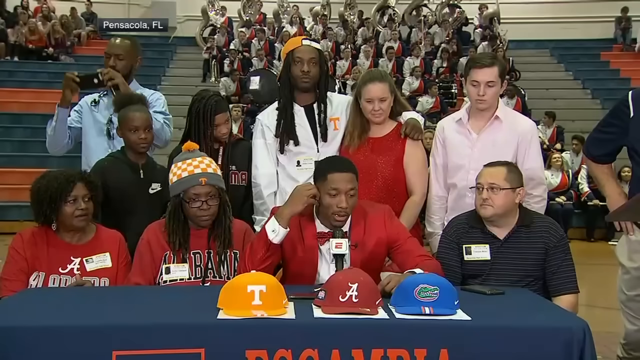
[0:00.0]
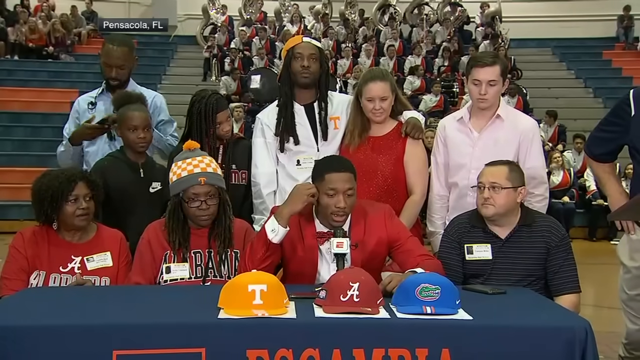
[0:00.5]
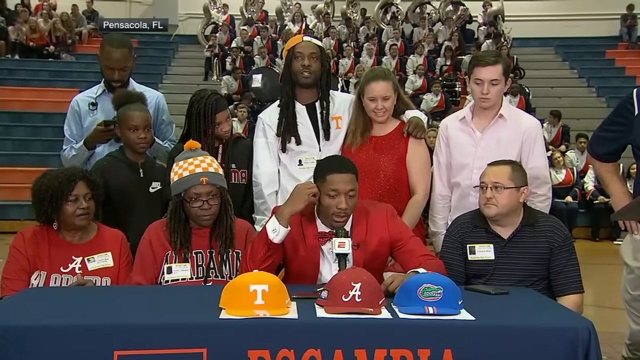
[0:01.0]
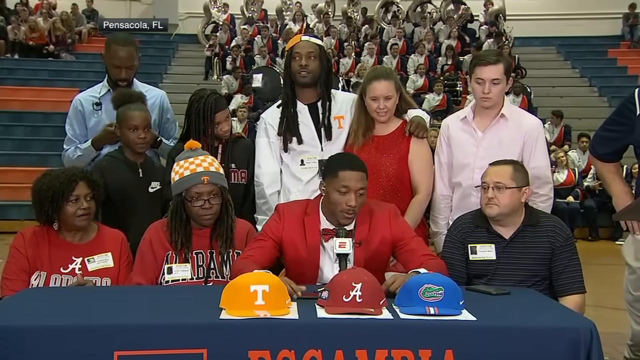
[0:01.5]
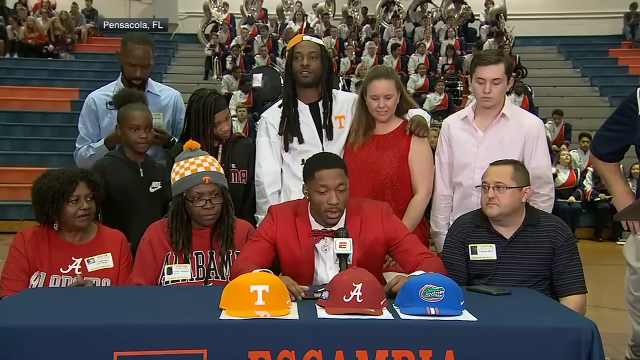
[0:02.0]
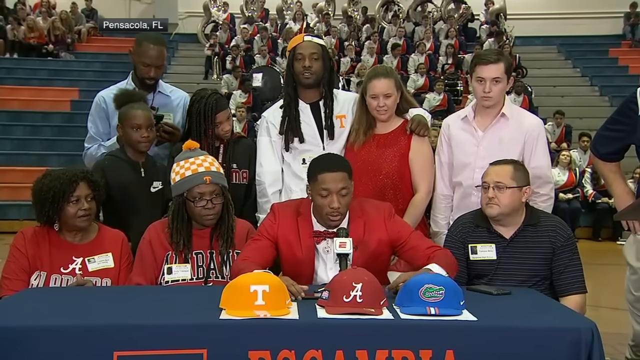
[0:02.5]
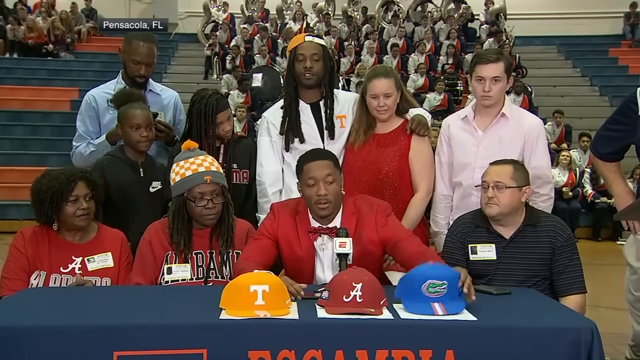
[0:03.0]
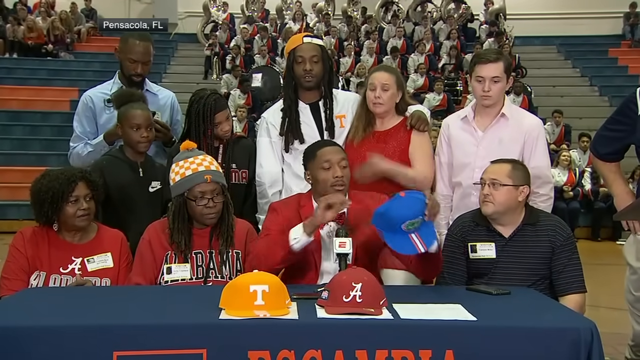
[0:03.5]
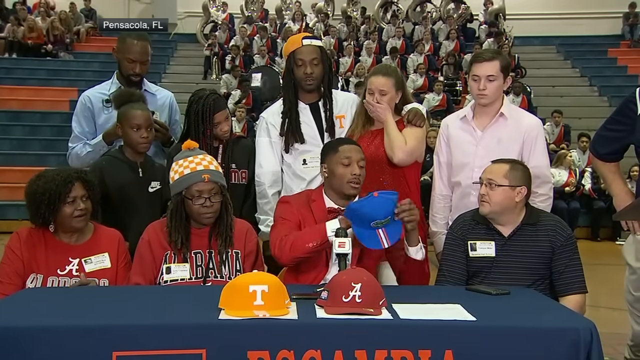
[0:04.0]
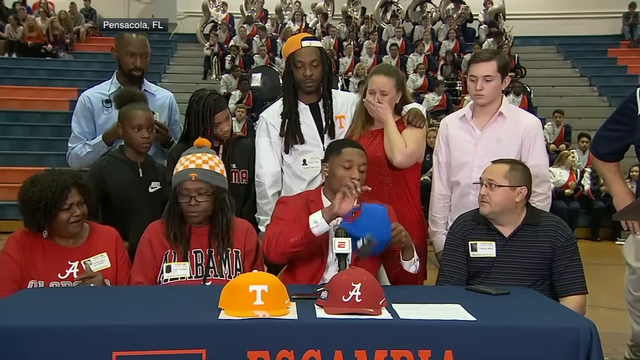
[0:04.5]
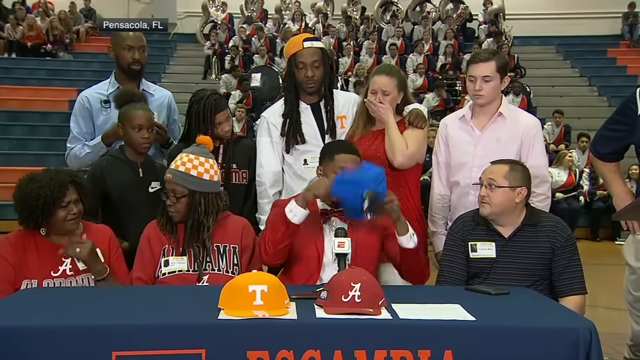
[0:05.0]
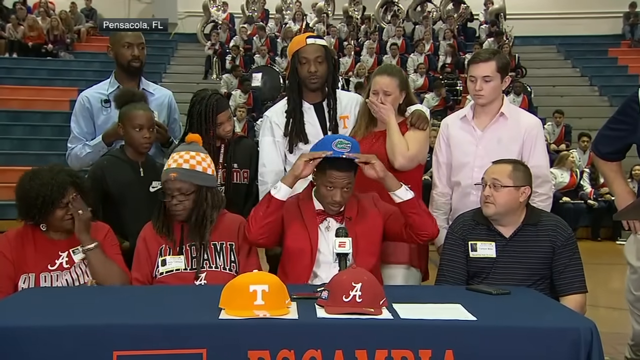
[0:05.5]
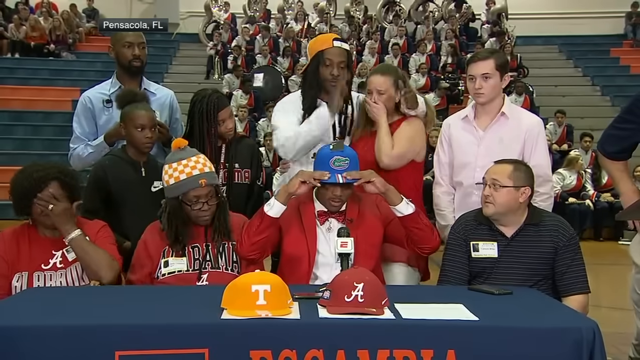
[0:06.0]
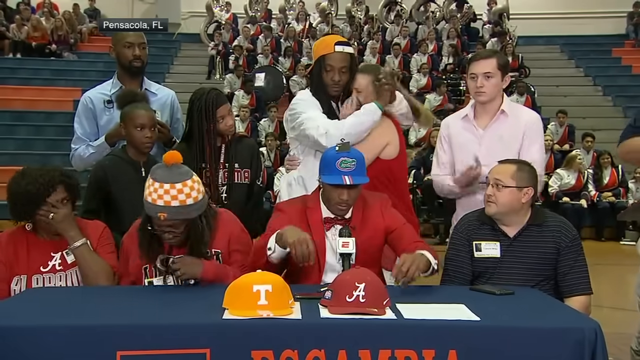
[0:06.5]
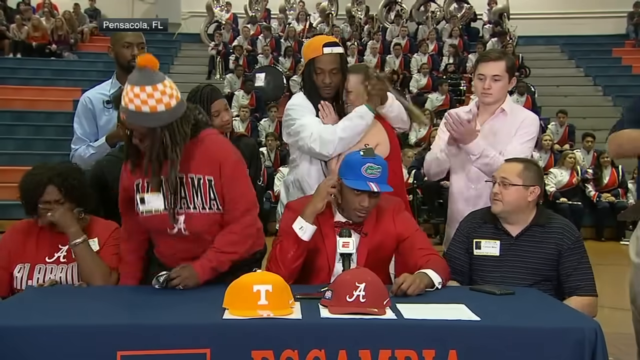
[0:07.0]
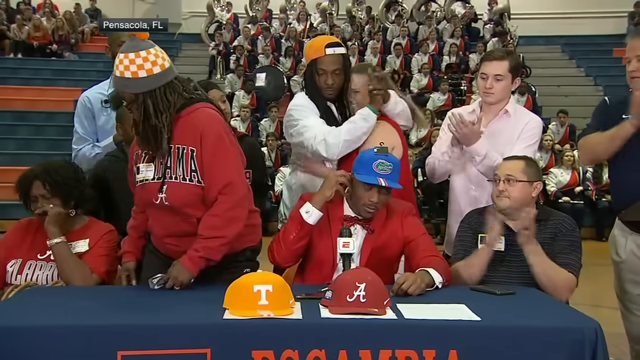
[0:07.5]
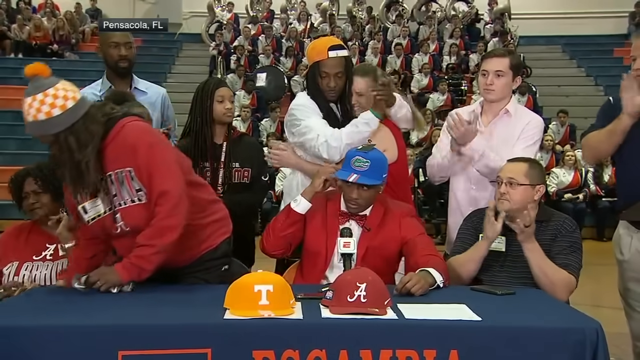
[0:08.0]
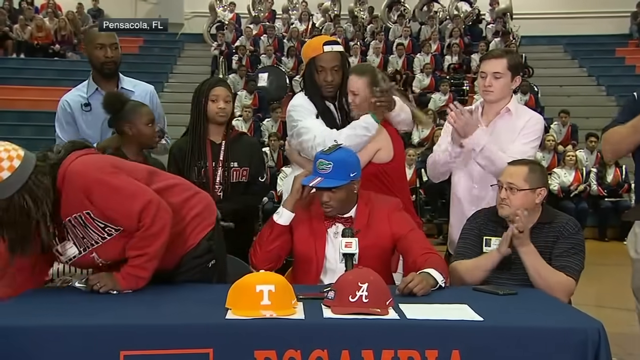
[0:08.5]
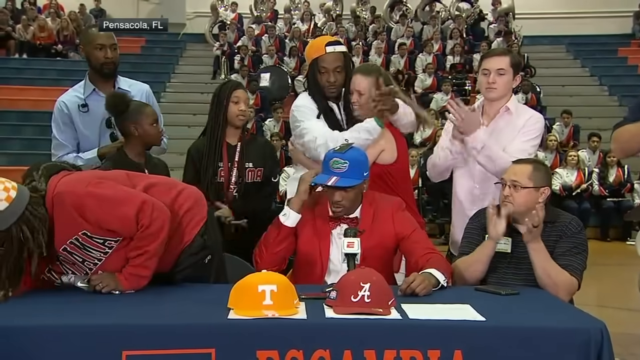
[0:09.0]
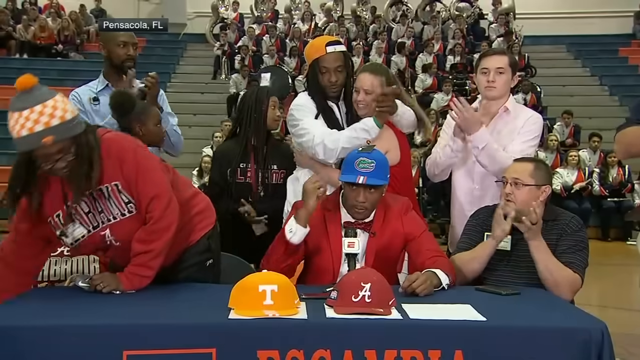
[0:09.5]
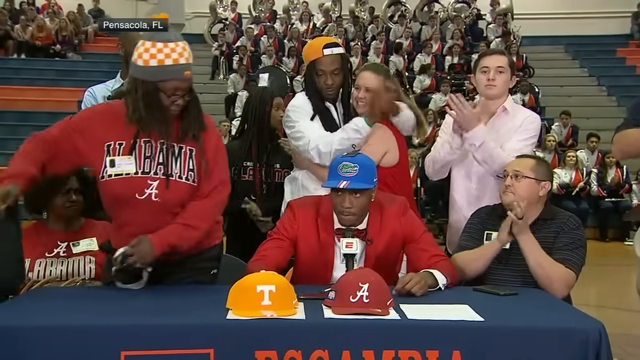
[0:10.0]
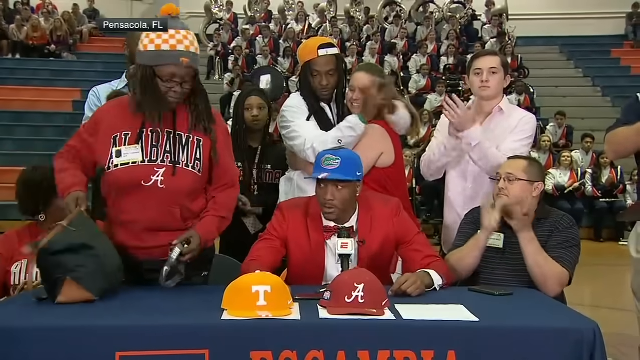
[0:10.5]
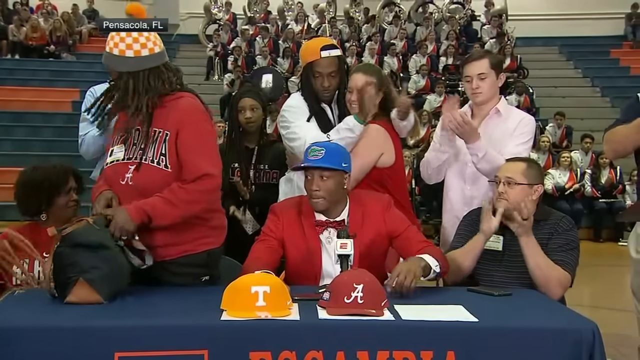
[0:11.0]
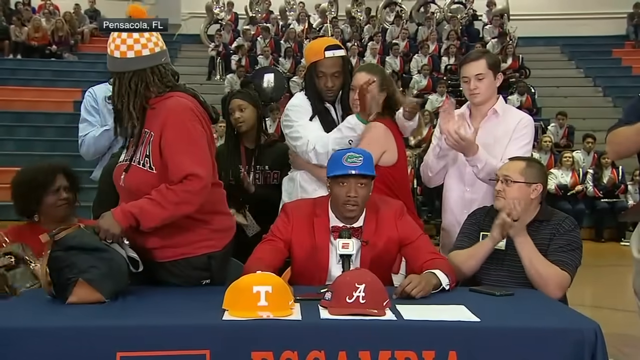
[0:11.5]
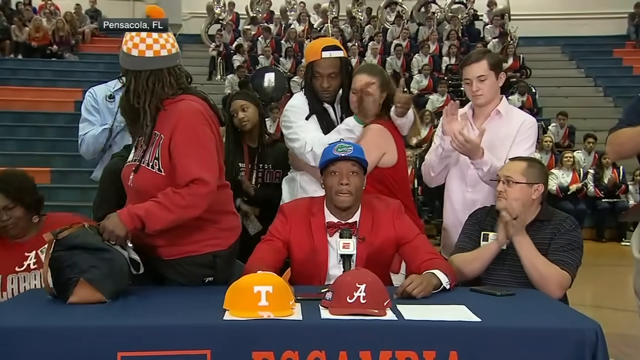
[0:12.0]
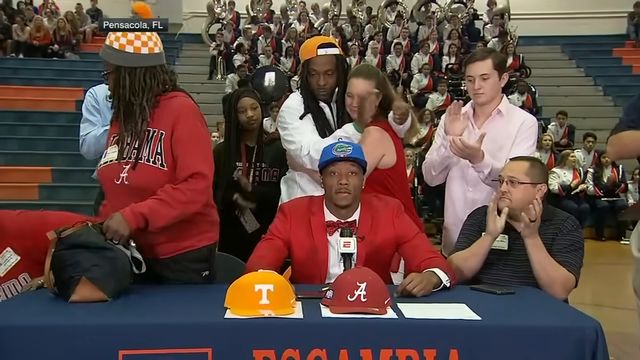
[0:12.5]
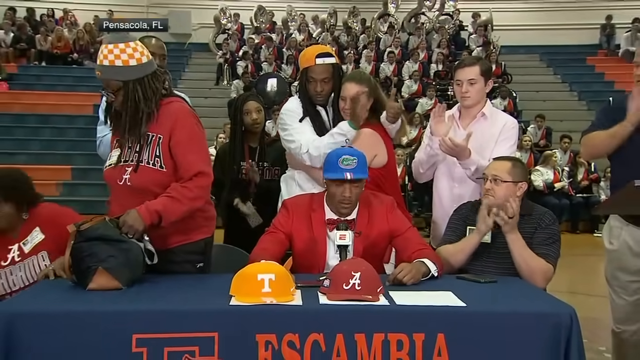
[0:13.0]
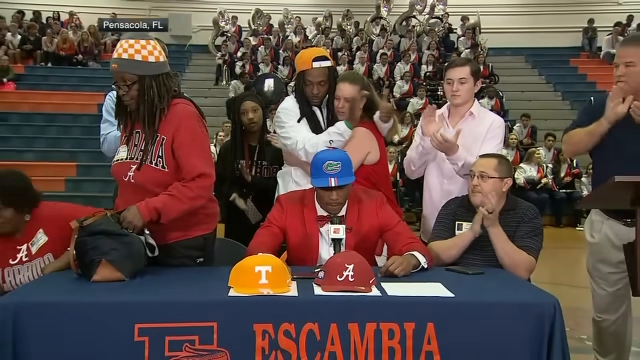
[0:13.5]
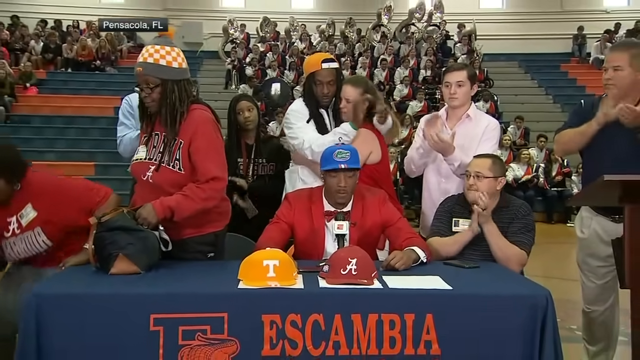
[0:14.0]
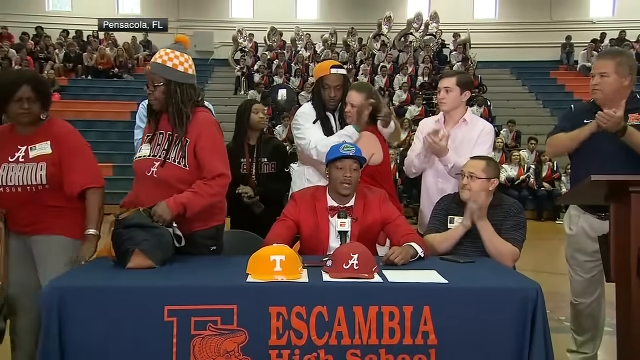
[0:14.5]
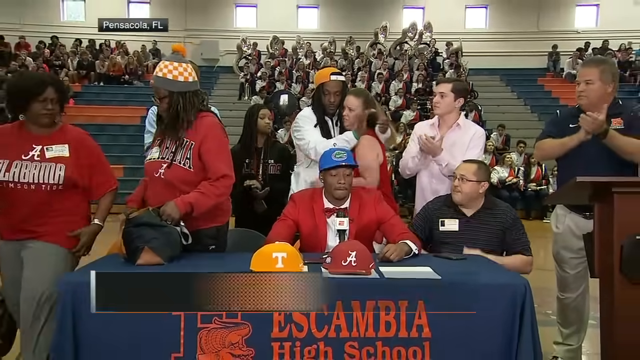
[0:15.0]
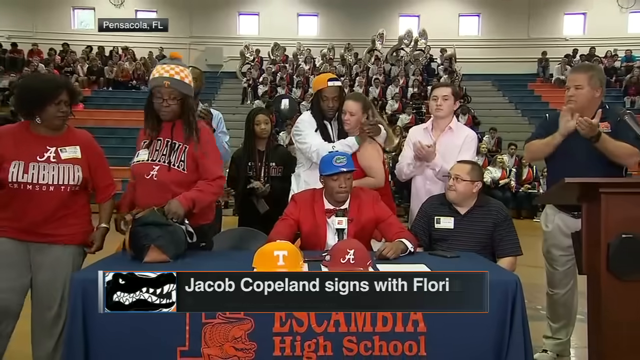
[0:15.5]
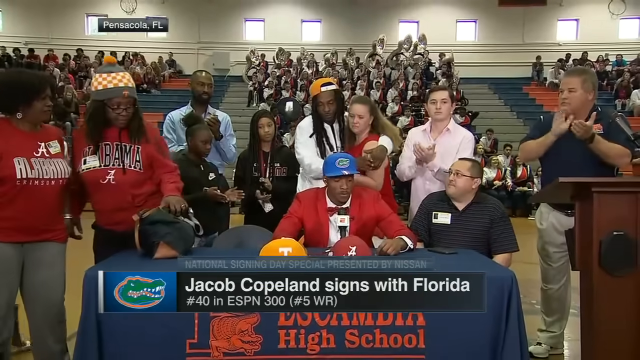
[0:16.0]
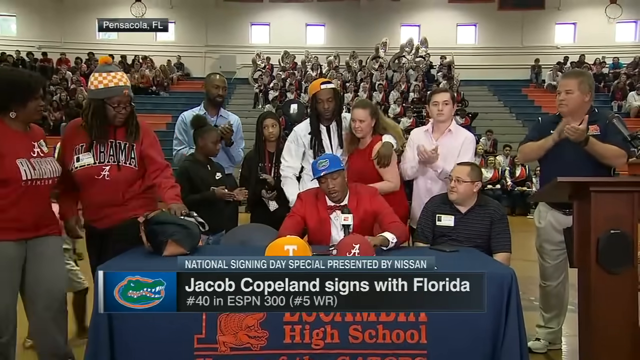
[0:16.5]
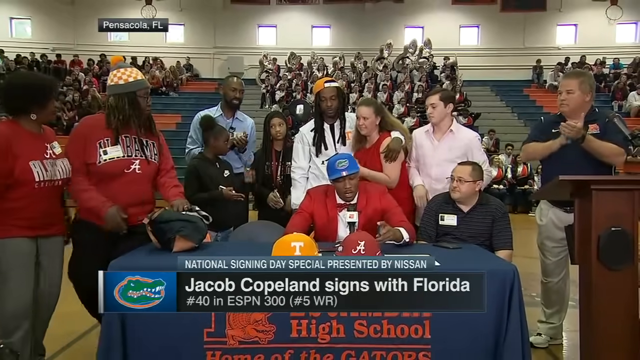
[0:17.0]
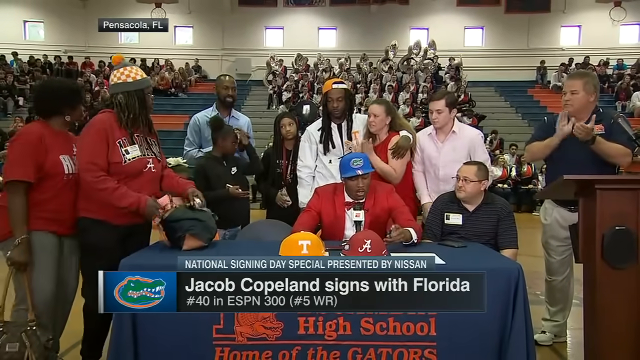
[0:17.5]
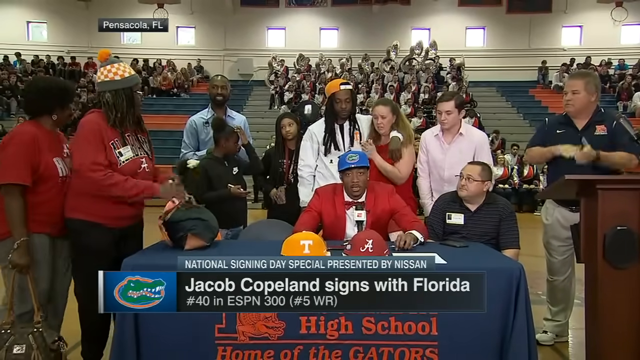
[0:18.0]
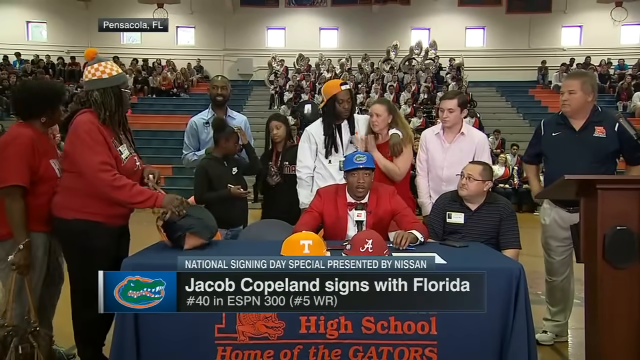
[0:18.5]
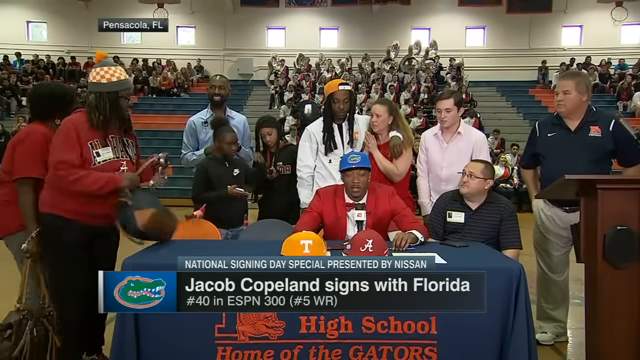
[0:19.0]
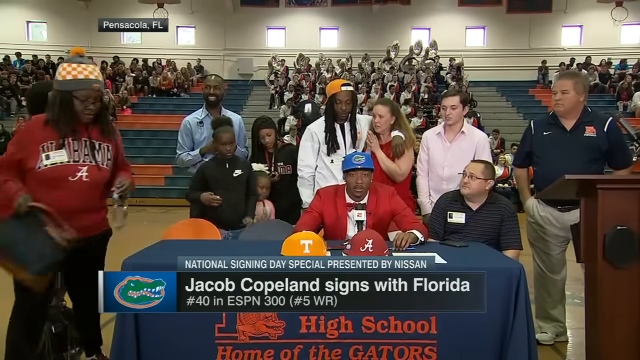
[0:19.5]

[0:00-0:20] A young man sits at the center of a table. In front of him are three baseball caps: a Tennessee Volunteers cap, an Alabama Crimson Tide cap, and a University of Florida Gators cap. He is dressed very nicely in a red sports coat with a red bow tie. He is surrounded by people, possibly parents, family members and friends. Two women are to his right (the viewer's left), and a man in a polo shirt is to the viewer's right (his left). Behind him is another row of people dressed in different school colors and shirts. In the backdrop there appears to be some sort of high school marching band dressed in unison, and people sitting in rows of bleachers. Toward the top left of the image, a man in a blue button-down shirt holds his phone as a camera, apparently getting ready for an announcement of which school the young man will choose. The young man talks into a microphone, and a few seconds in he casually picks up the blue Florida Gators cap and puts it on his head. Everyone around him begins to cheer and clap their hands. The shot pans out, and his name is given: Jacob Copeland, signing with Florida, the number five wide receiver recruit nationwide according to ESPN.